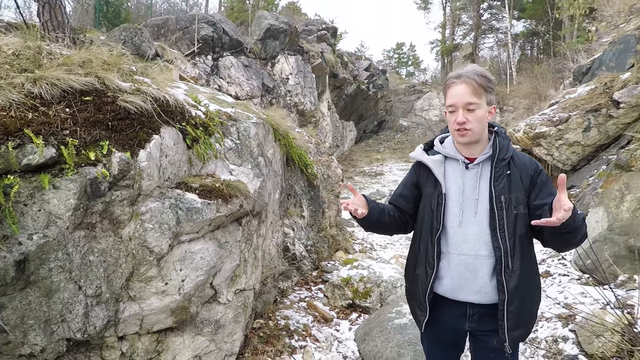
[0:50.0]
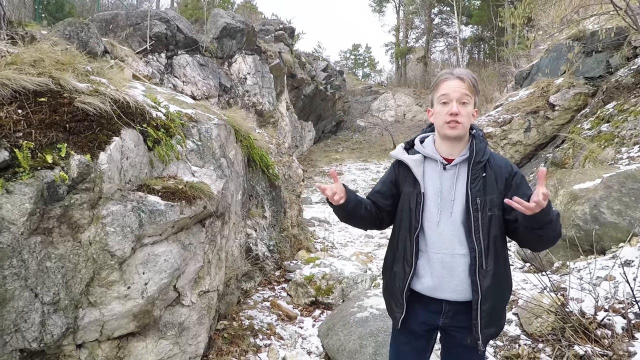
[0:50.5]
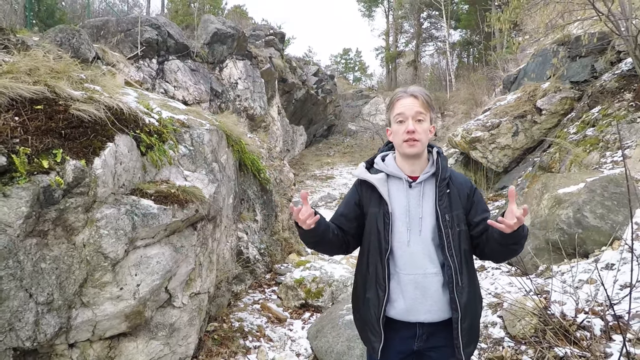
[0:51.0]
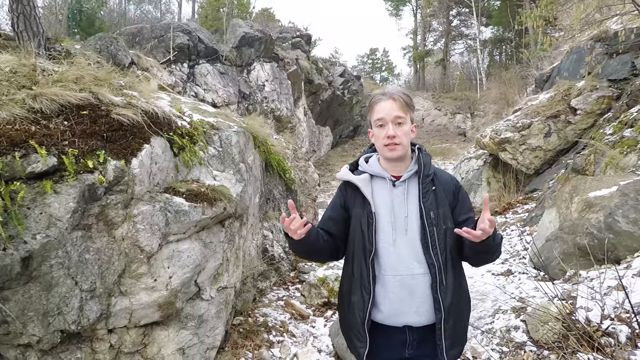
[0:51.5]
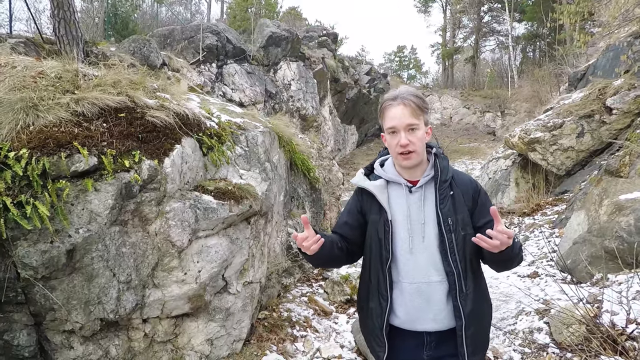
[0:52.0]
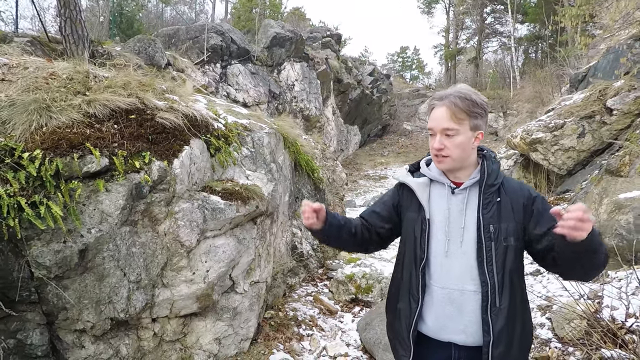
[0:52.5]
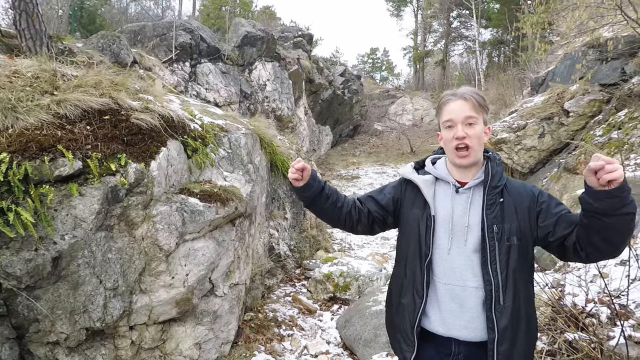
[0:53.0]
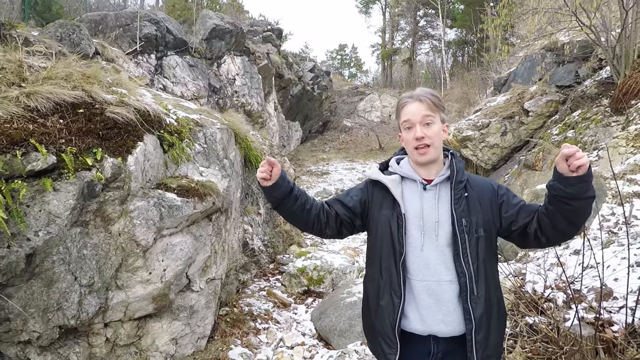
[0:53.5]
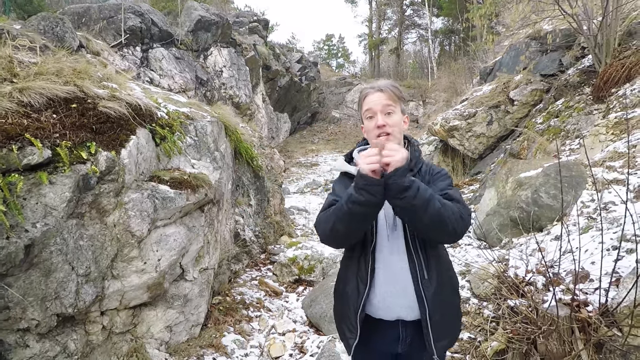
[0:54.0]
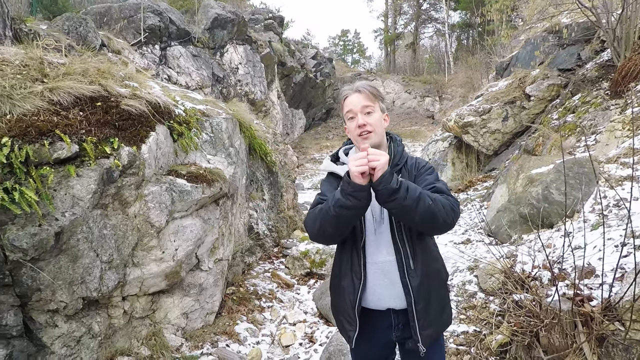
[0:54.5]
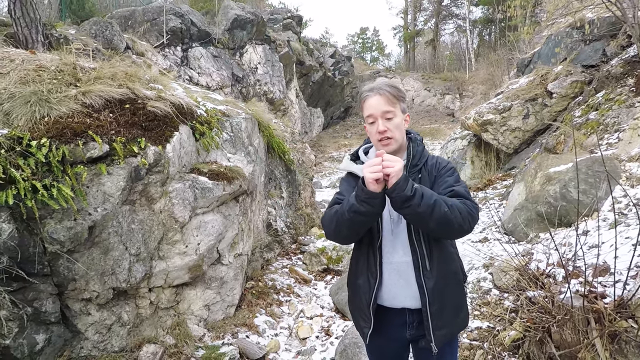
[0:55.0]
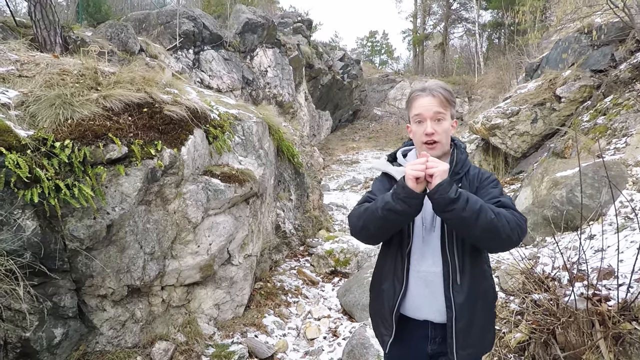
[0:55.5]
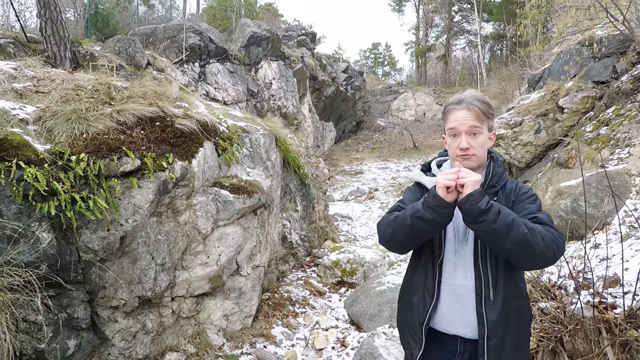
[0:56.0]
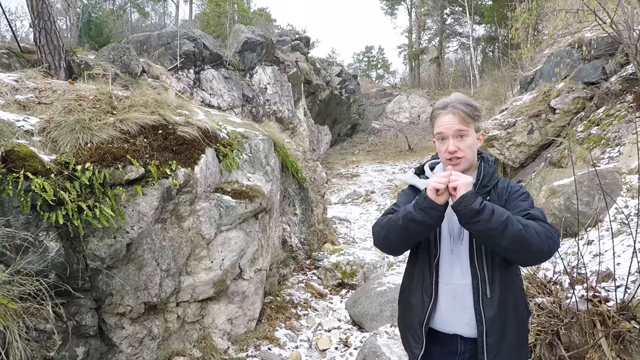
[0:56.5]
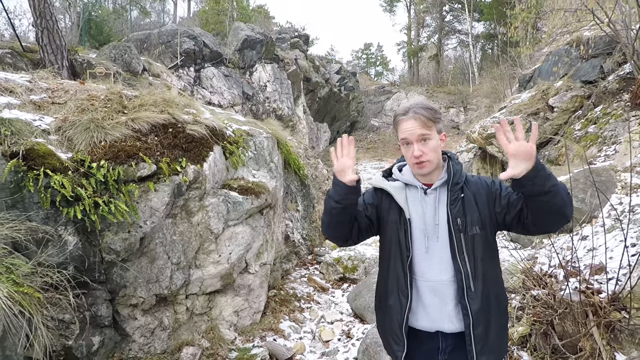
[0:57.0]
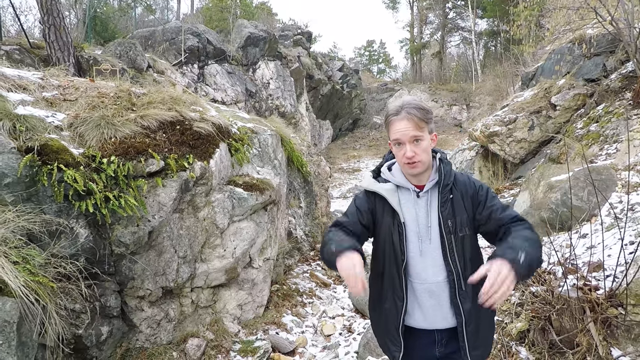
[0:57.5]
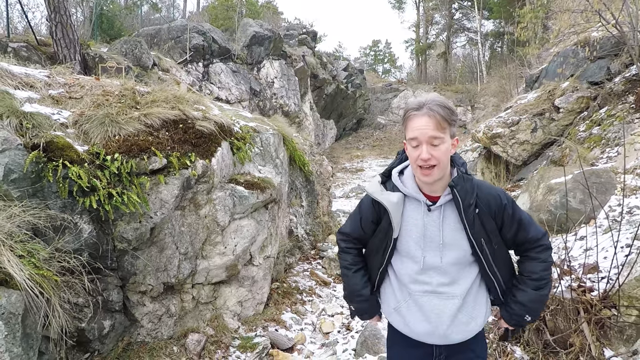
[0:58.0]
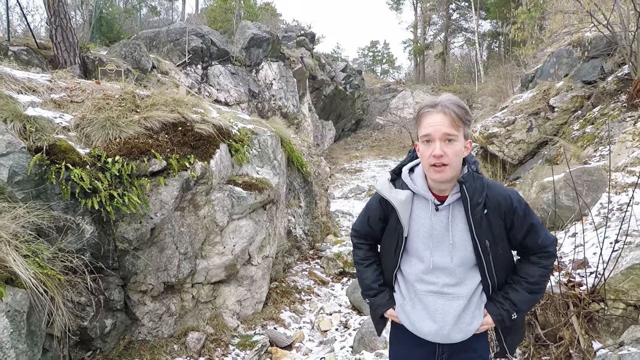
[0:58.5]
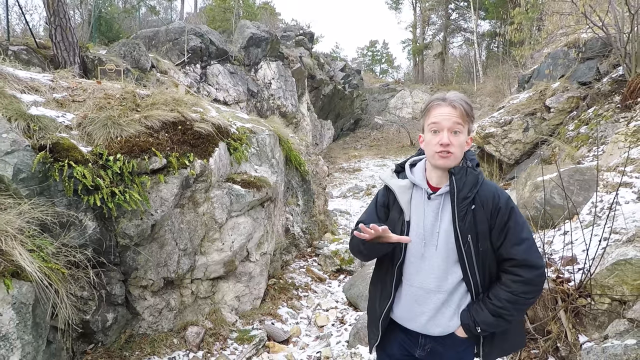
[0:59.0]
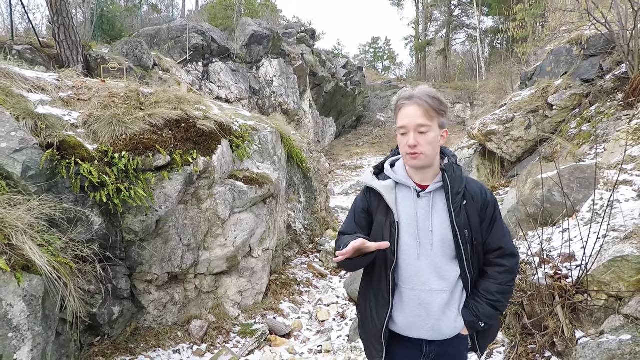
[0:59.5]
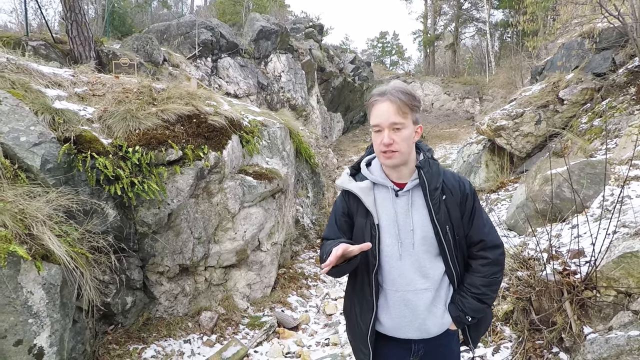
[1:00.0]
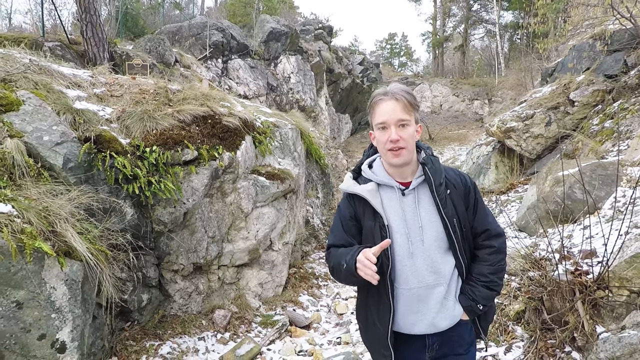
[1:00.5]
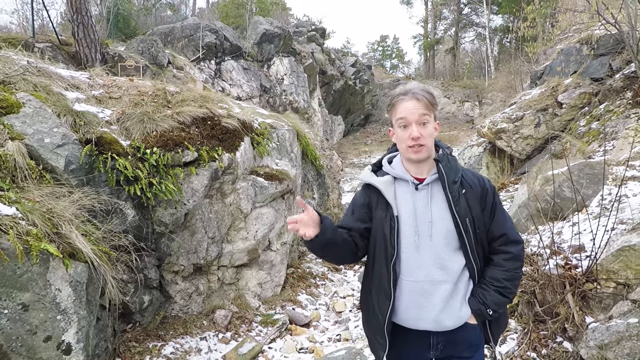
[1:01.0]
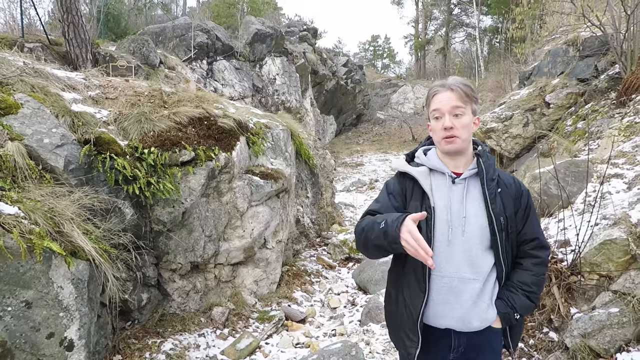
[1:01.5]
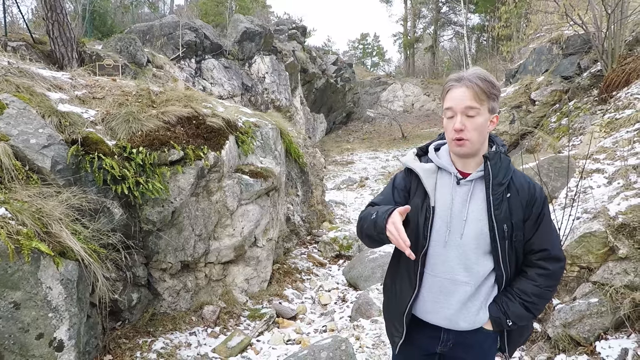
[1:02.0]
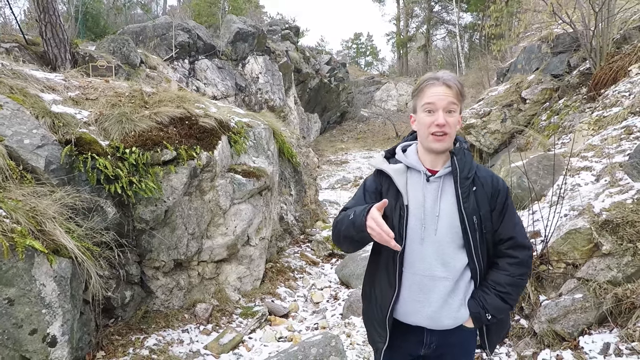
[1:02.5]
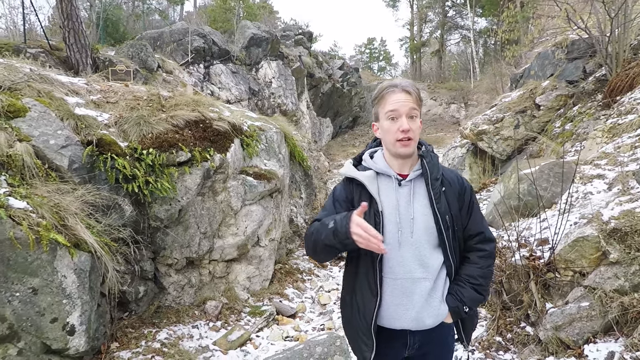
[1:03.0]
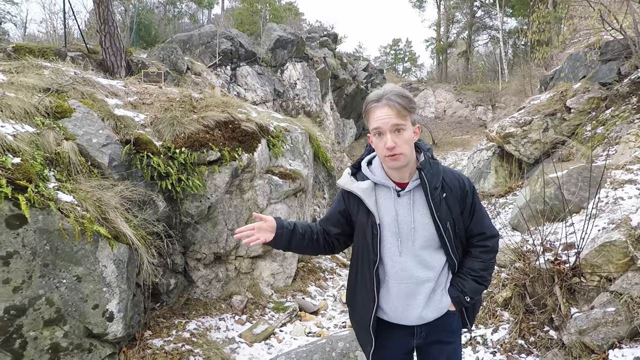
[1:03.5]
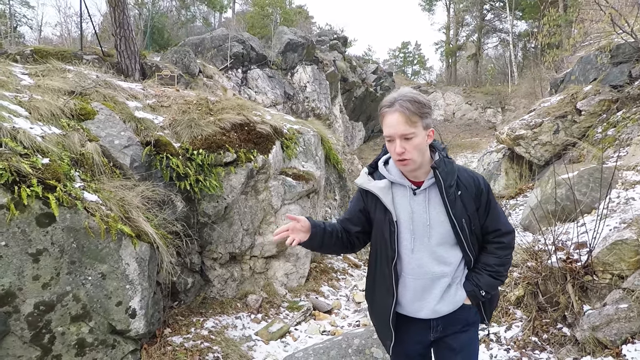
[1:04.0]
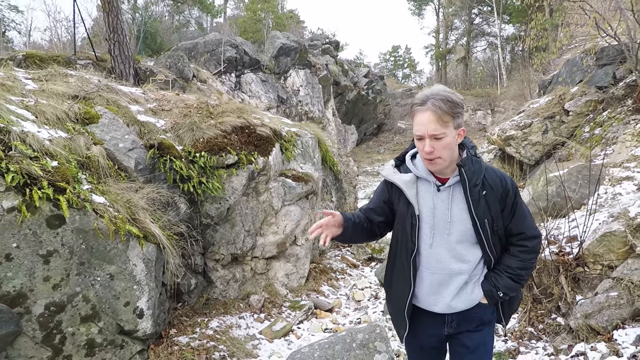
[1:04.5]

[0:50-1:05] The video is called Things You Might Not Know, One Town, Four Elements, Yidderby. A white man in a winter jacket clasps his fists together, puts his hand in his pocket and gestures, making motions with his hands as if describing some kind of explosion. He is by a lot of rocky structures: massive rock formations with a lot of brush and trees growing around them and a lot of algae growing on the rocks. Snow is on the ground, there are some half-dead trees, and there are no houses or animals around him. It definitely looks like winter, or at least fall, with cold weather. He looks to be in his early or mid thirties, with kind of grayish blonde hair, and wears a navy jacket with a gray hoodie underneath.